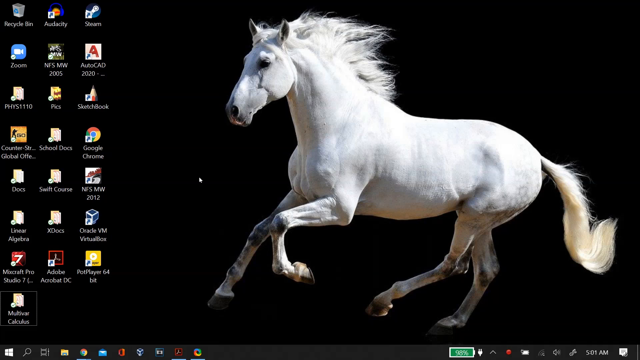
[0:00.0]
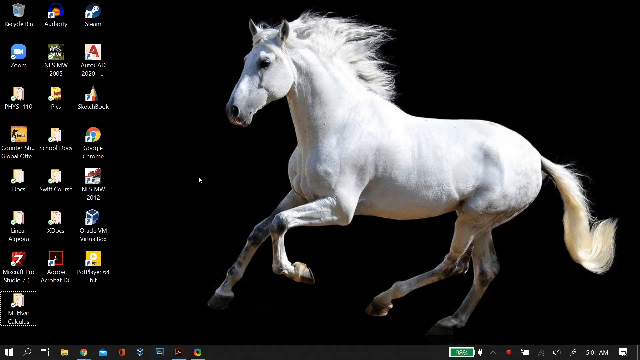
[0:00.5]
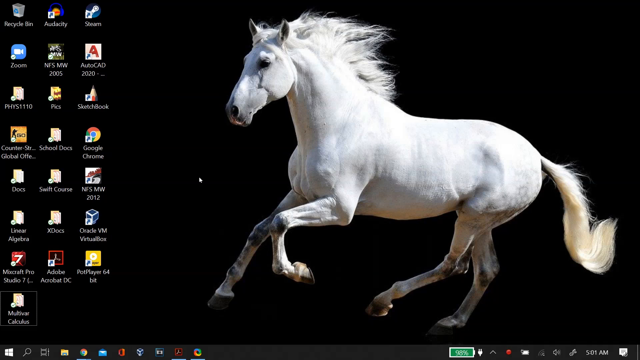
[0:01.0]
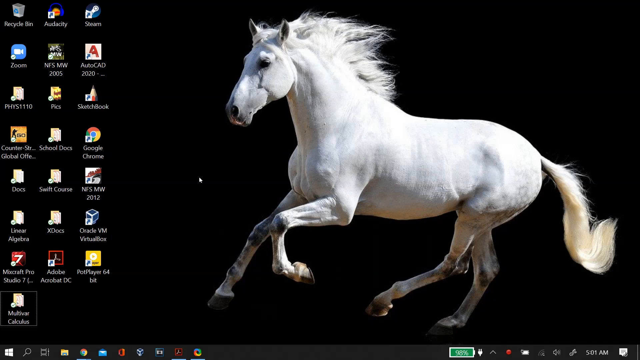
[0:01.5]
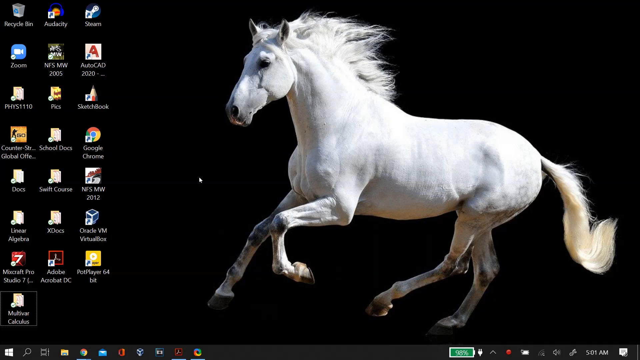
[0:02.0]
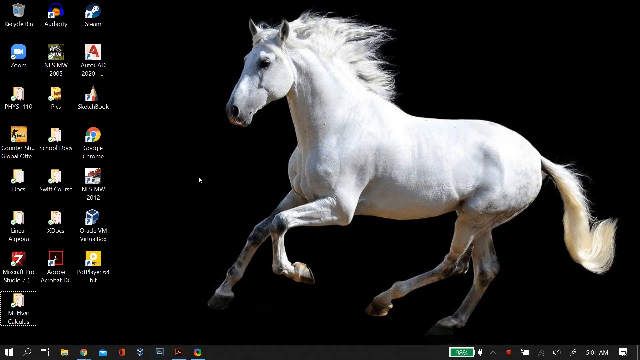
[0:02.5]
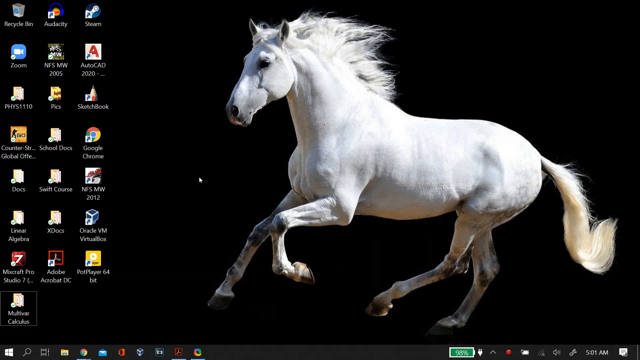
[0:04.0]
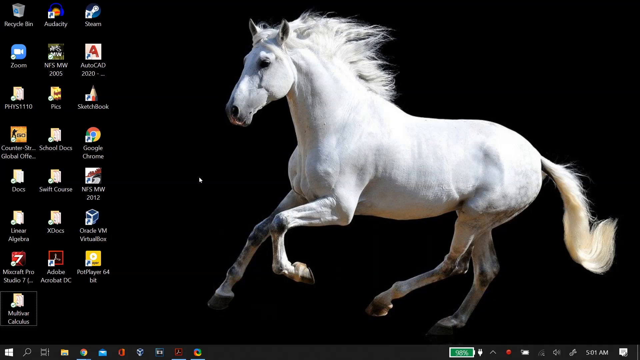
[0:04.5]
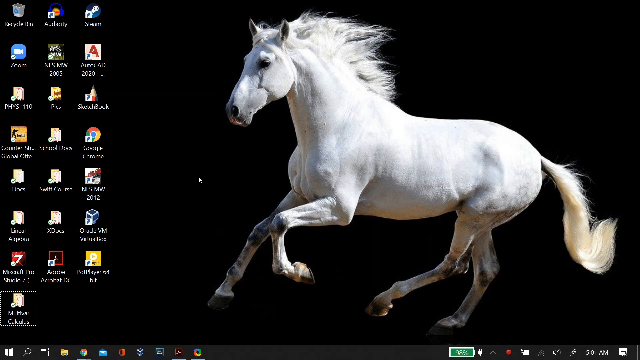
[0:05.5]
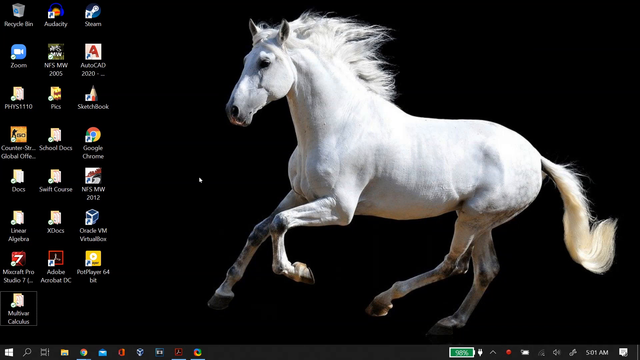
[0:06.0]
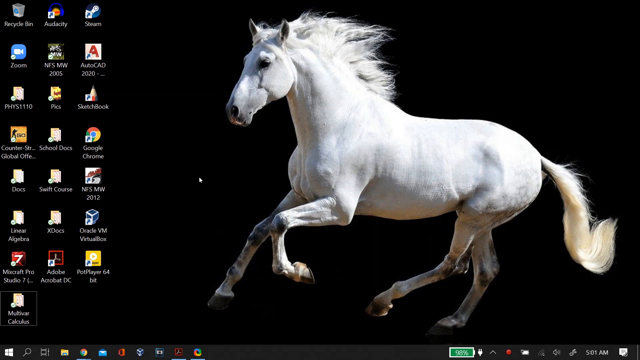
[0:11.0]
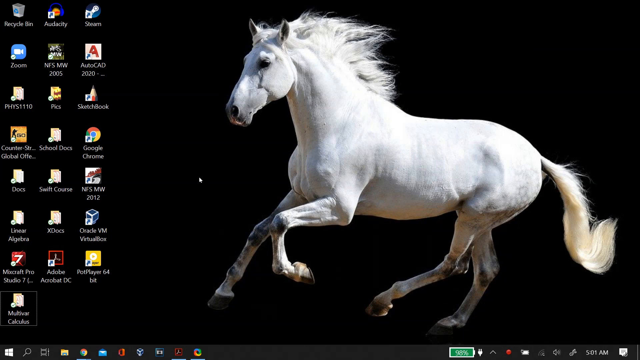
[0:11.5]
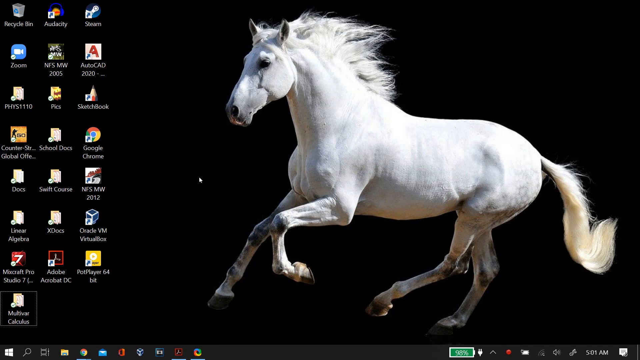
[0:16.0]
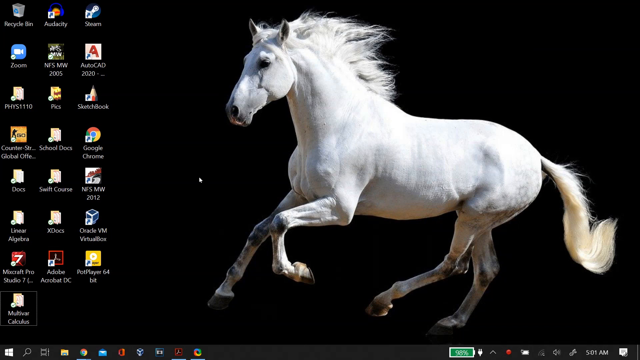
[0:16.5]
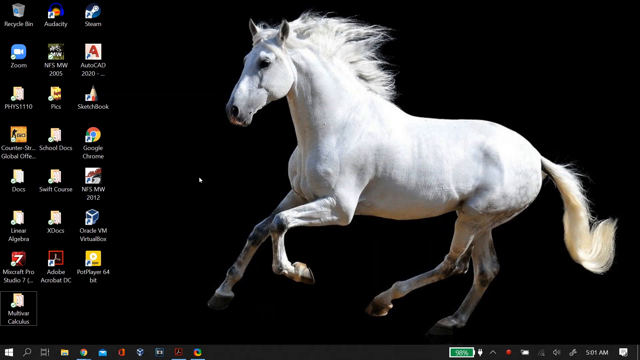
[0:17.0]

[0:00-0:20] A computer desktop is shown with a white horse on the background. The operating system seems to be Windows, judging by the logo on the left and the toolbar at the bottom. Installed applications include Zoom, Google Chrome, Oracle Virtual Boxes, Adobe Acrobat, AutoCAD, Steam and Audacity, along with several folders, probably personal. Some Google Chrome and Adobe tabs are open in the toolbar below. Nothing else happens; the desktop background with these apps simply stays on screen. It looks like it might be a tutorial.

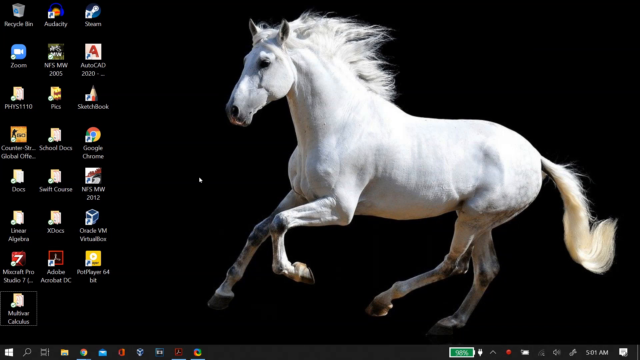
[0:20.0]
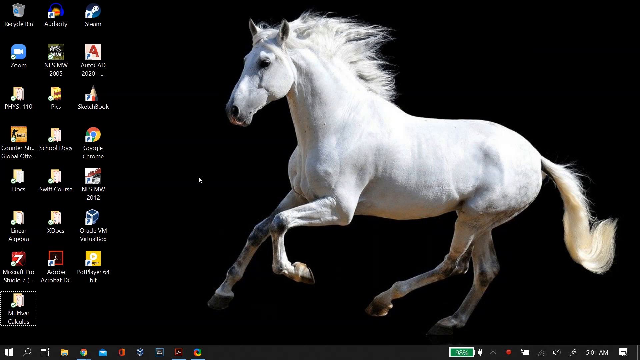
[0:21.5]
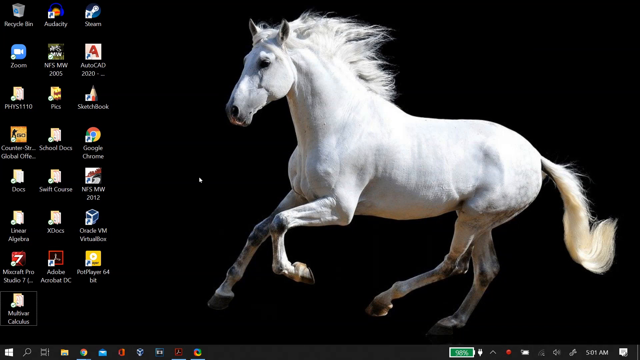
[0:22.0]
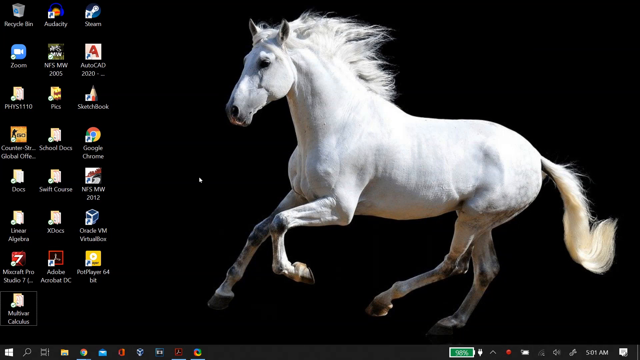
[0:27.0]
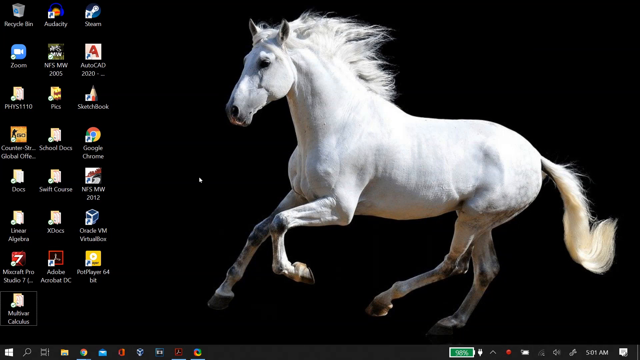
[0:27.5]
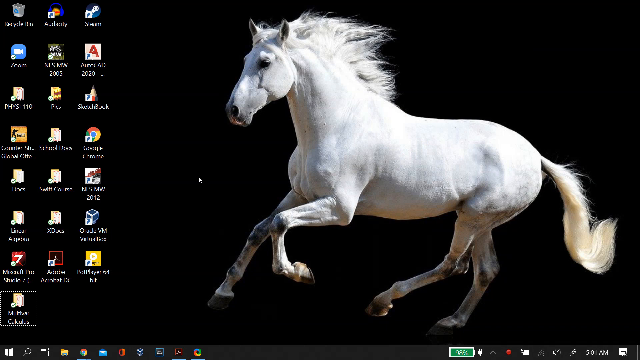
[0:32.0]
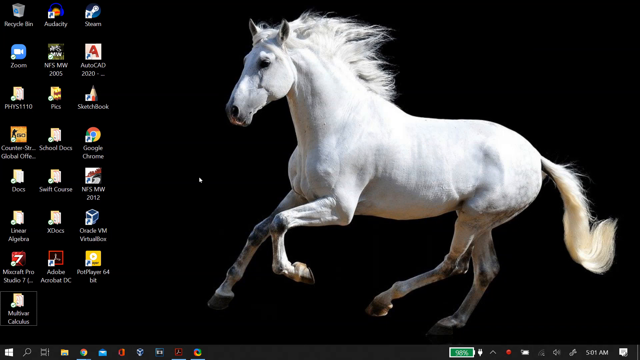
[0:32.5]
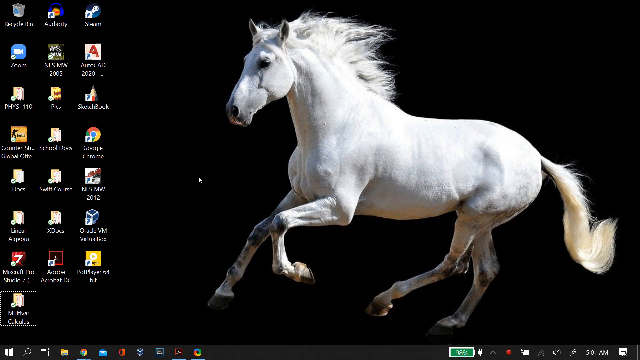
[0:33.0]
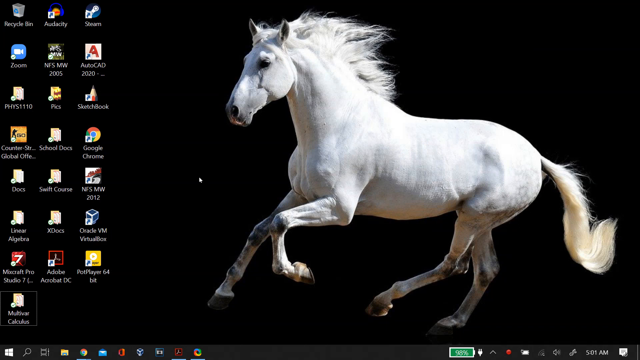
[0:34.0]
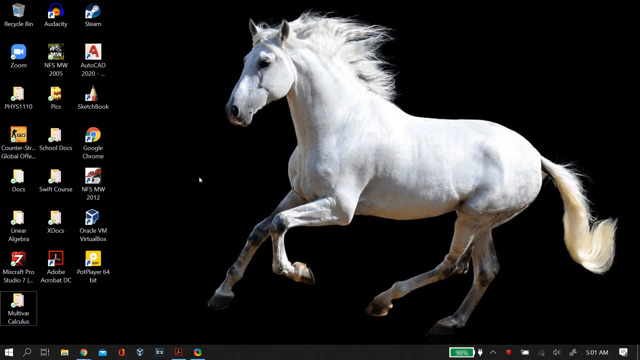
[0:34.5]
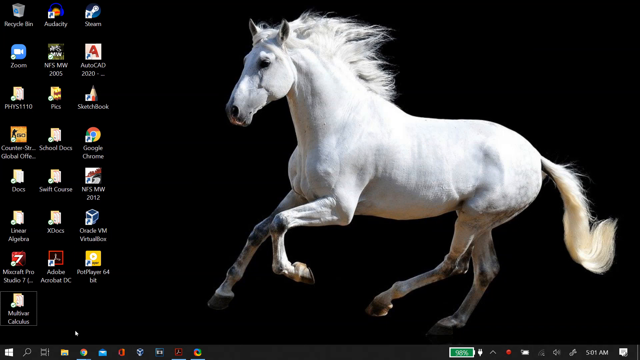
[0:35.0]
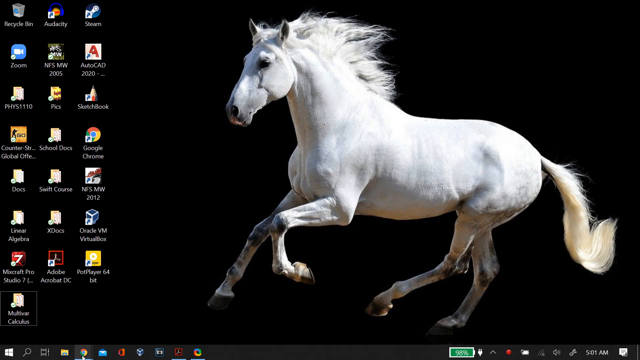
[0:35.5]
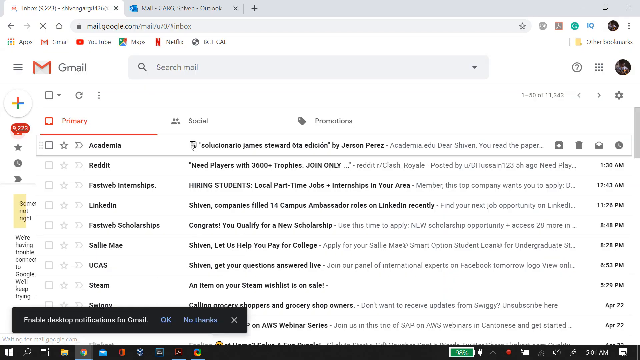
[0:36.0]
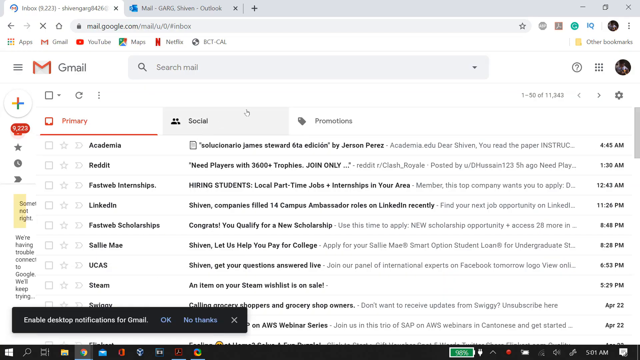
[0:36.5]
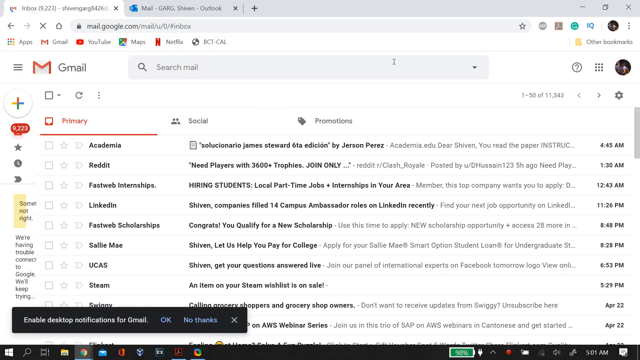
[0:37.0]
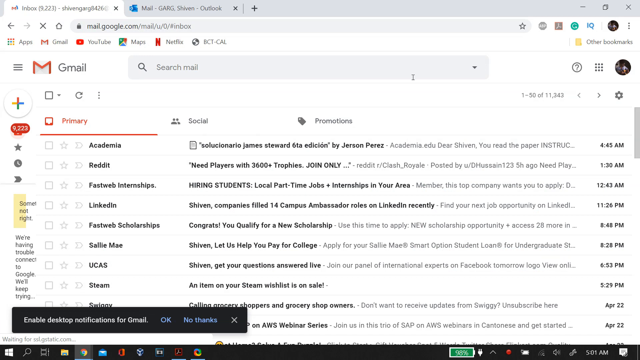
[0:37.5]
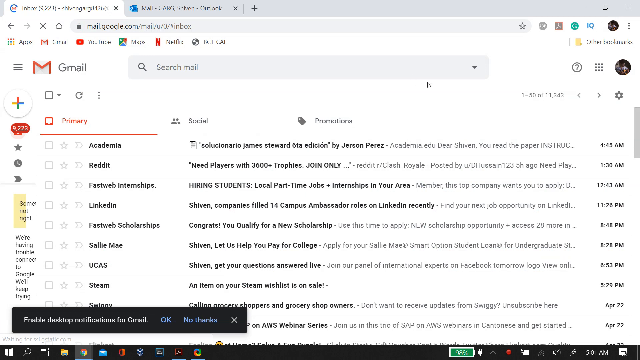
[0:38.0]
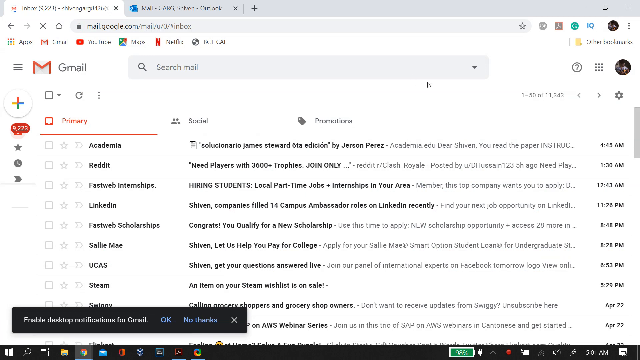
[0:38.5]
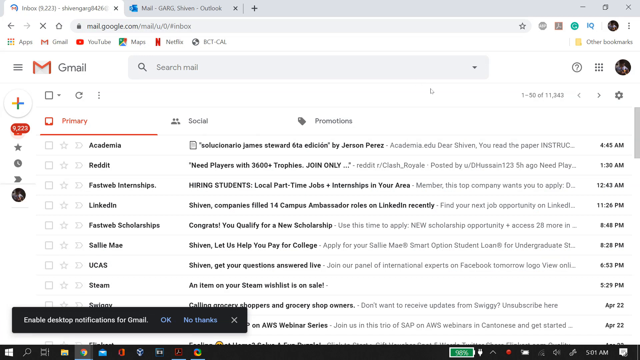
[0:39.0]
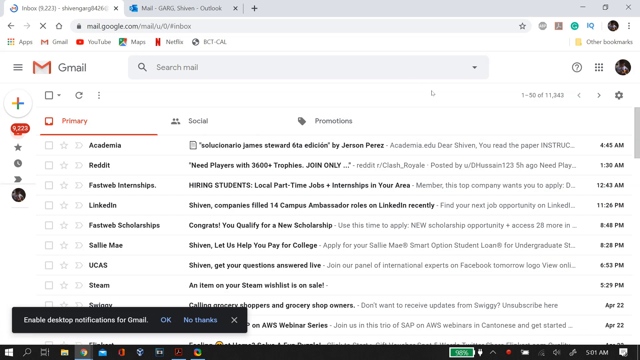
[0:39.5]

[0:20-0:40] The desktop with the white horse in the background remains, and the mouse stays still for a while. The user then opens a Google Chrome tab from the toolbar below. One browser tab has Gmail open and another has Outlook, and Gmail is the one being shown. The inbox contains unread emails from academia, Reddit, Fast Web Internships, LinkedIn, Fast Web Scholarships, someone called Sallie Mae, UCAS and Steam, among others. The bookmarks bar includes Gmail, YouTube, Maps and Netflix.